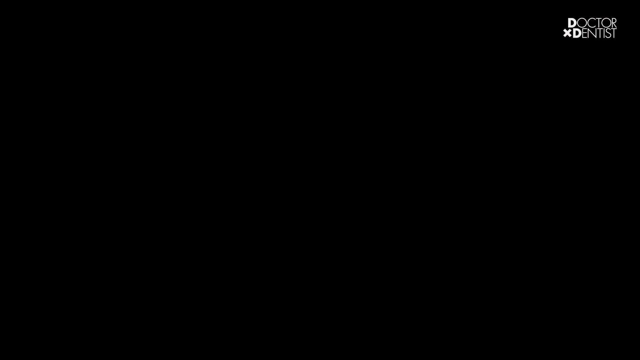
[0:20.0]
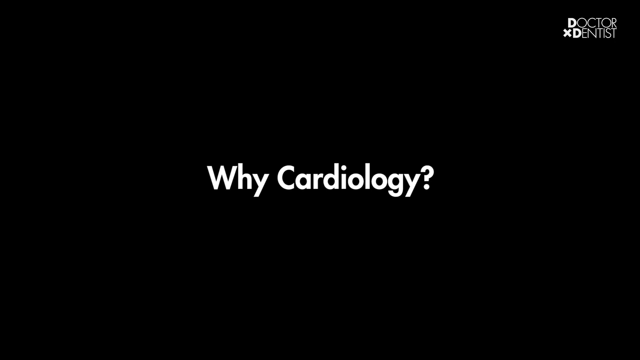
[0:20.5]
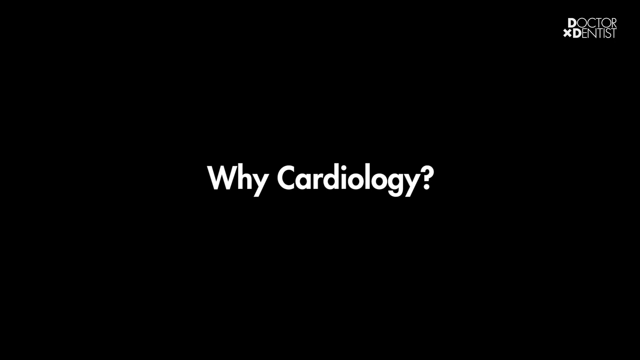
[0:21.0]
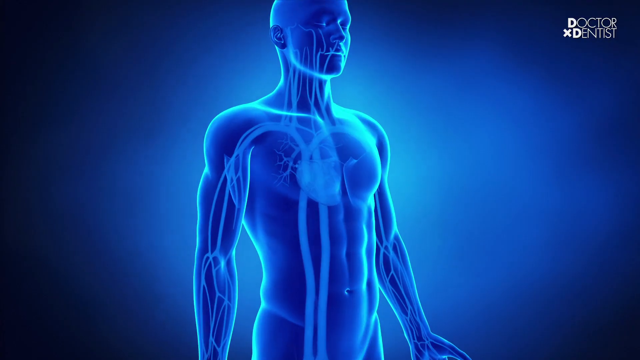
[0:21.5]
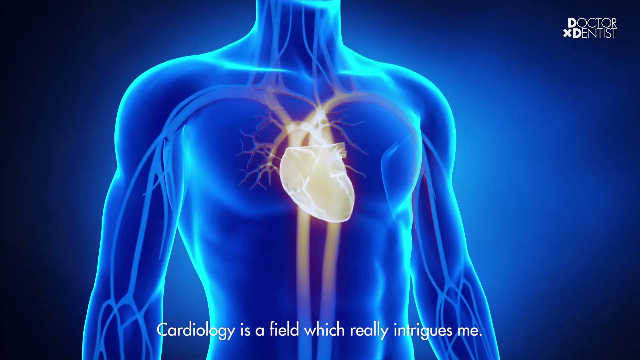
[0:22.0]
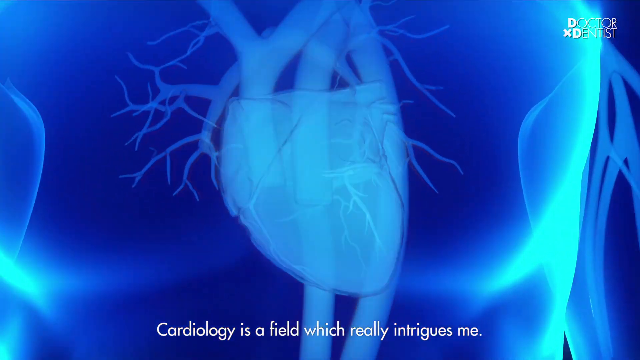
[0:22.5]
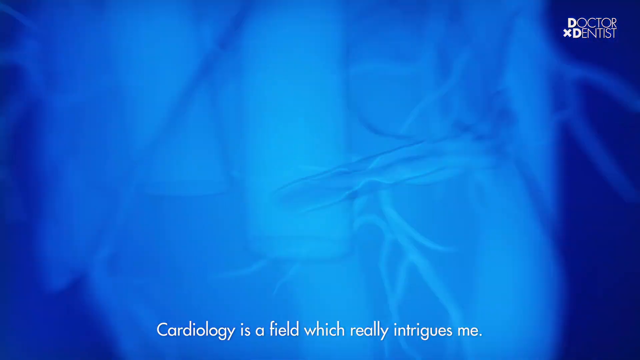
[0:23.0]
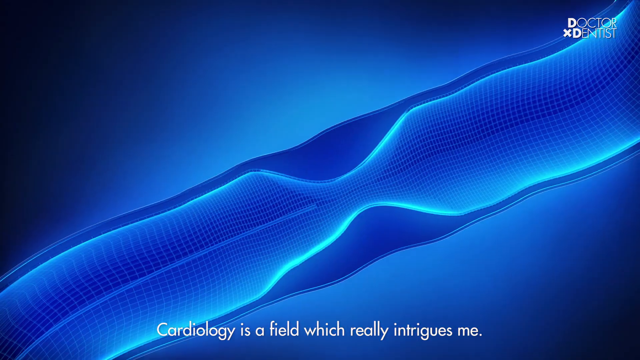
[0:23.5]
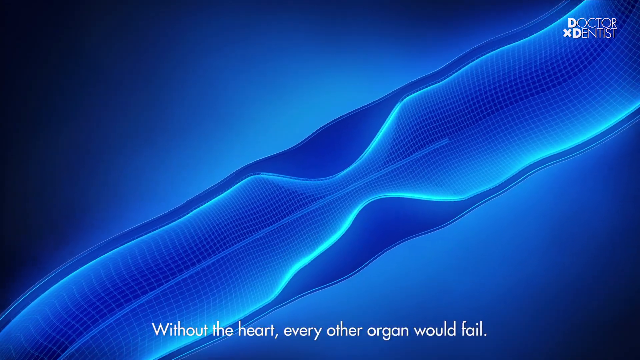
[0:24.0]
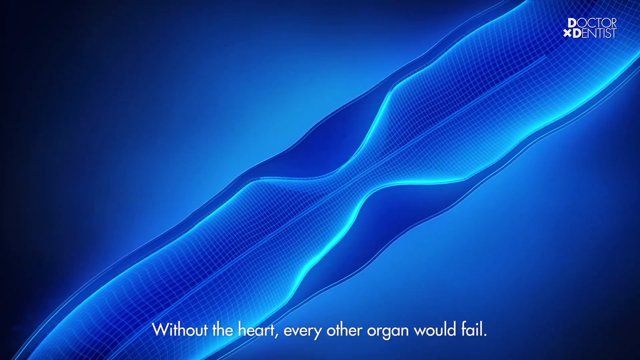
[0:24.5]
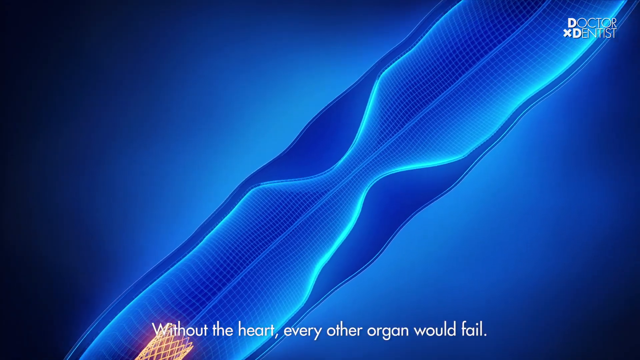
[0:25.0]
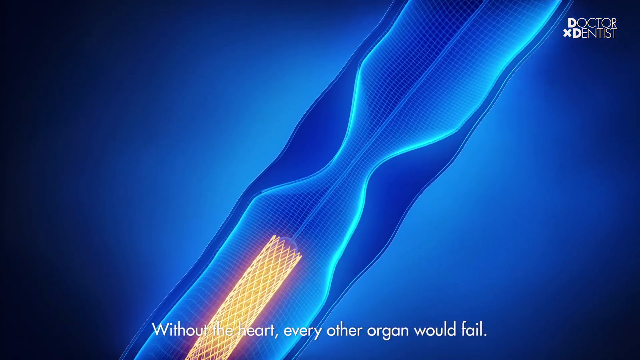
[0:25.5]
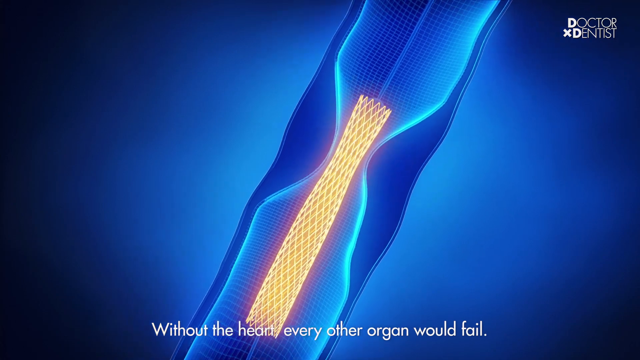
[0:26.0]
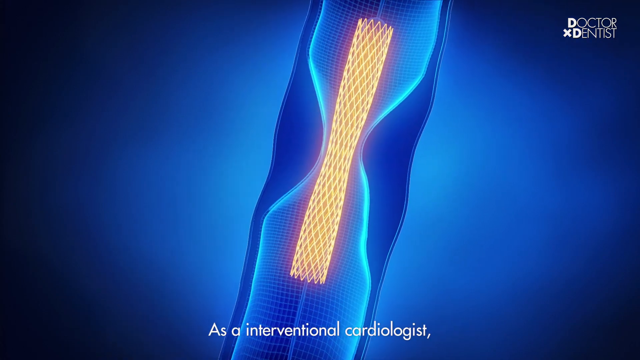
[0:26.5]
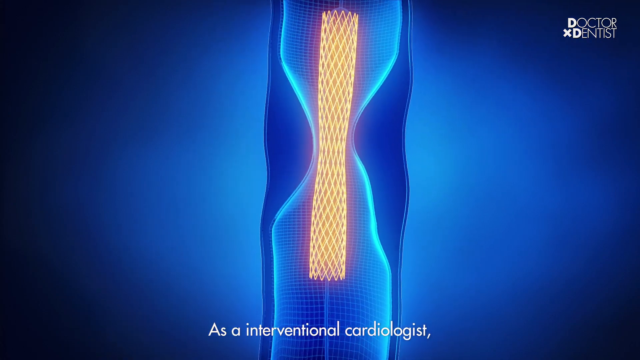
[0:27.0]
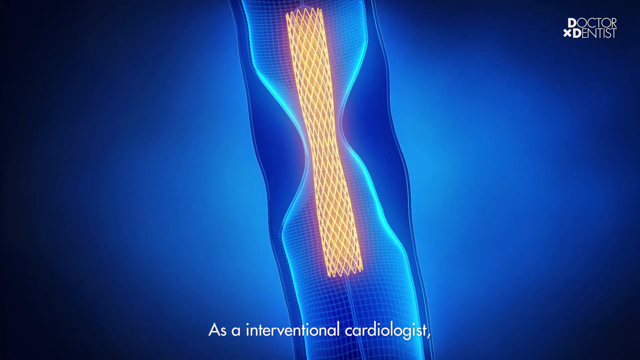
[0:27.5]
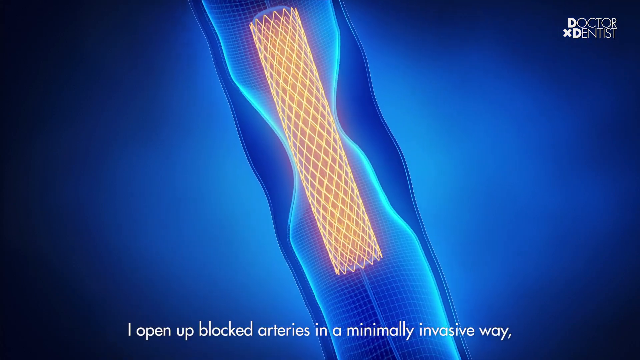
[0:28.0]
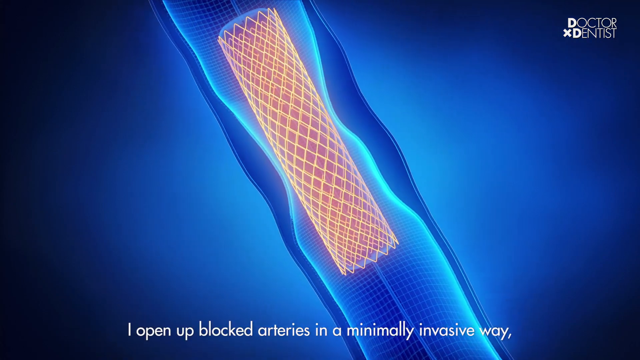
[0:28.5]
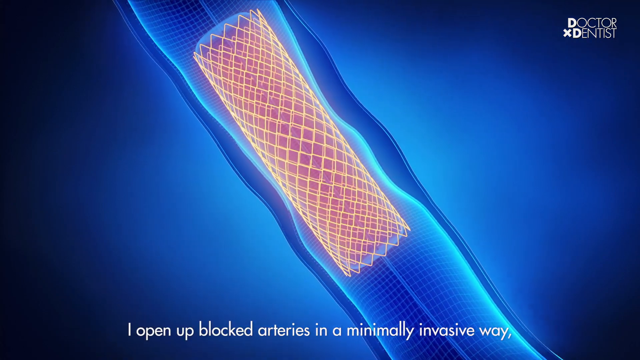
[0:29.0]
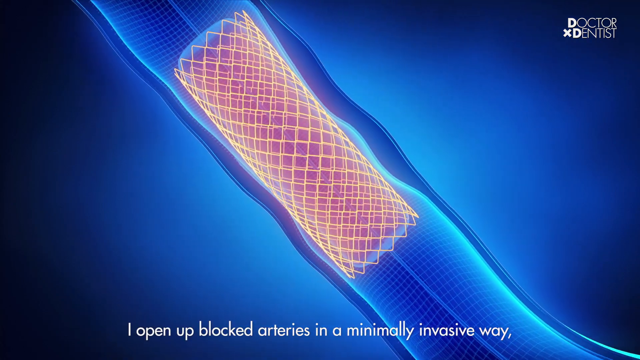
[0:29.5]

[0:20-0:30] A black screen reads "why cardiology." It immediately switches to a diagram of a person shown in blue, like an x-ray, so the heart is visible through the body, along with cords that could be all the cords connected to the heart running through the body. The video zooms in on the person's chest and toward the heart, which is highlighted in a gold-yellow-orange color against the blue of the person so it stands out clearly. Closer in, the inside of the heart is visible, showing what are presumably different ventricles. The view zooms into one of the cords, where an object lit up in orange moves through it and seems to expand through the cord. Then there is a short shot of the heart diagram the doctor was showing the woman.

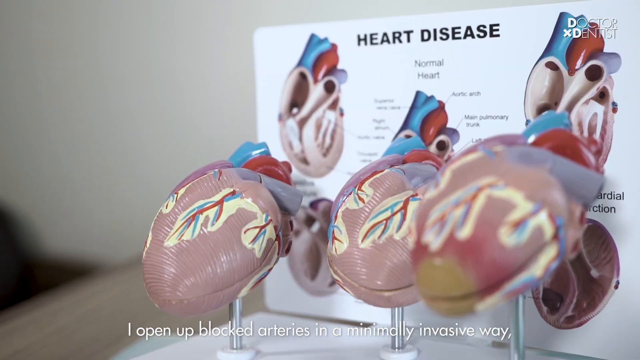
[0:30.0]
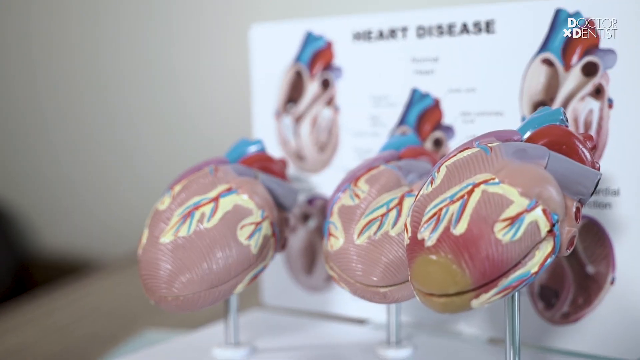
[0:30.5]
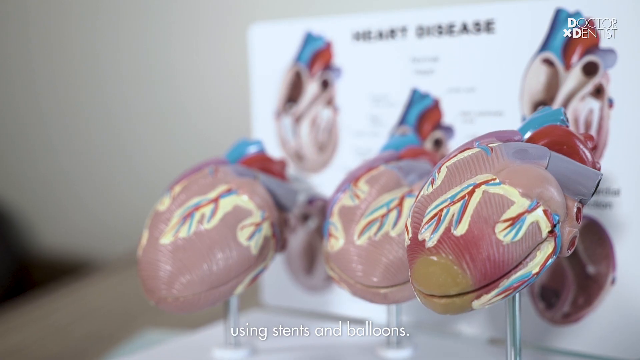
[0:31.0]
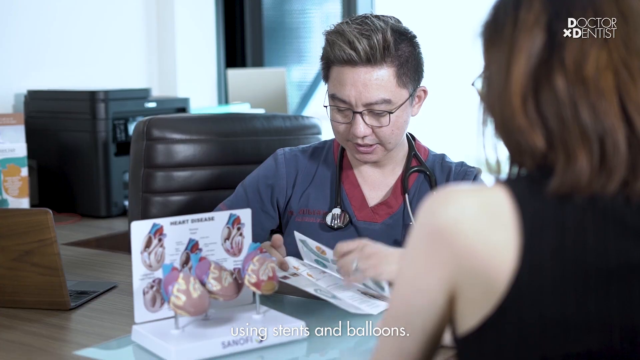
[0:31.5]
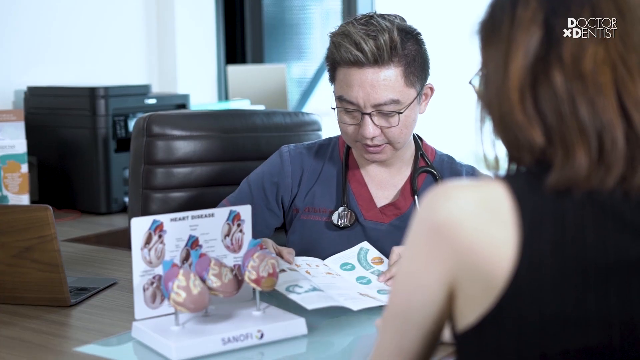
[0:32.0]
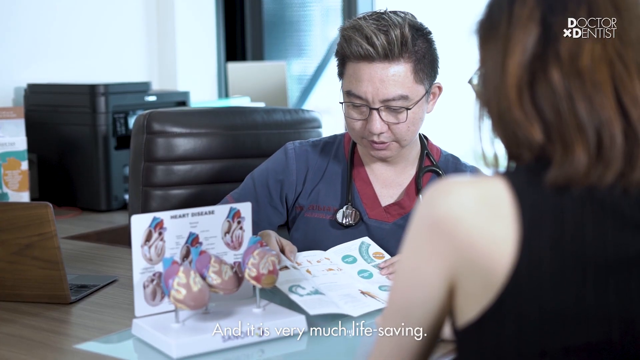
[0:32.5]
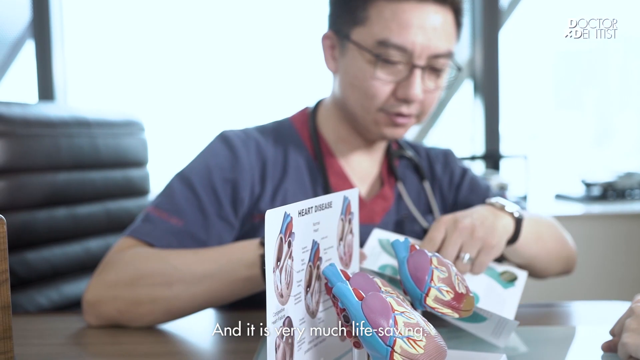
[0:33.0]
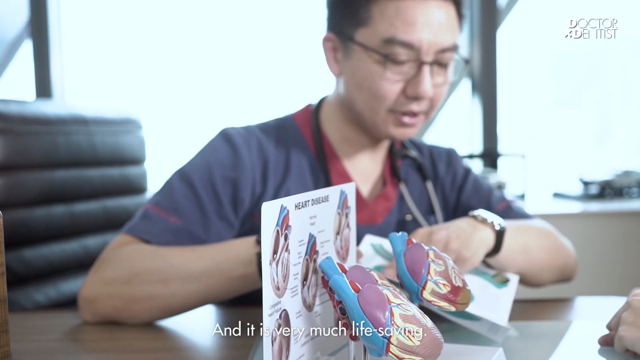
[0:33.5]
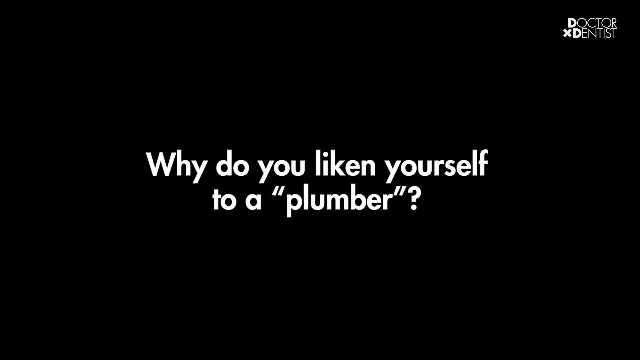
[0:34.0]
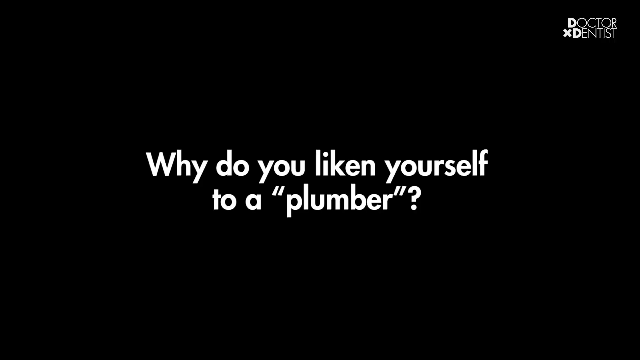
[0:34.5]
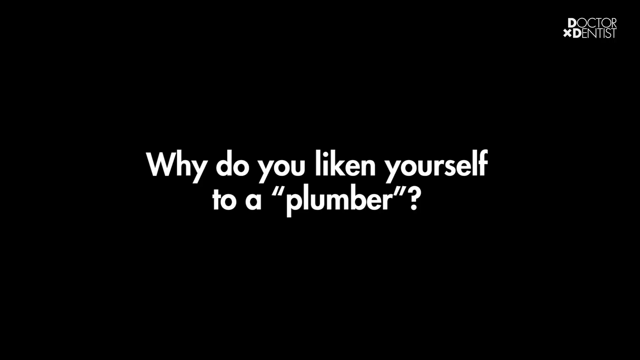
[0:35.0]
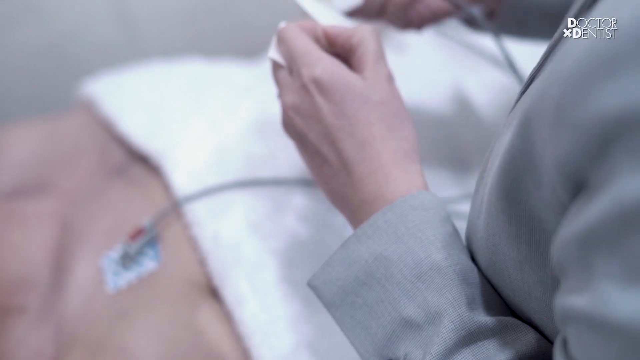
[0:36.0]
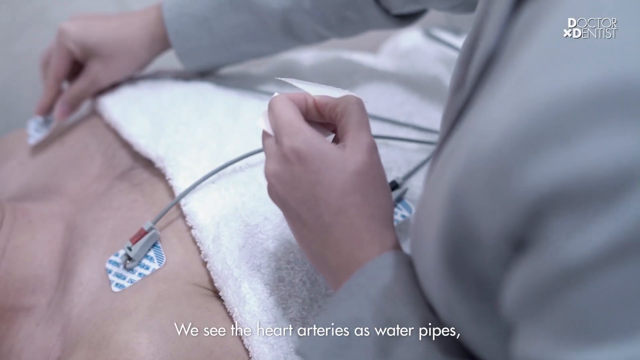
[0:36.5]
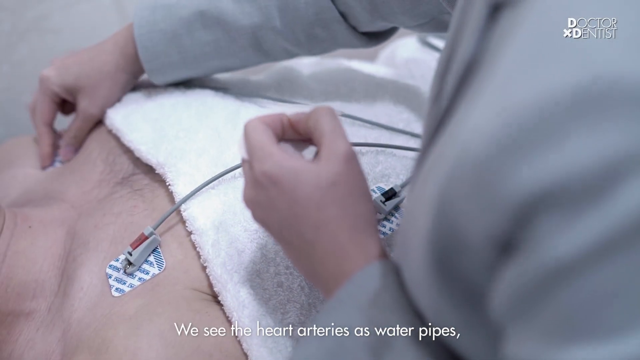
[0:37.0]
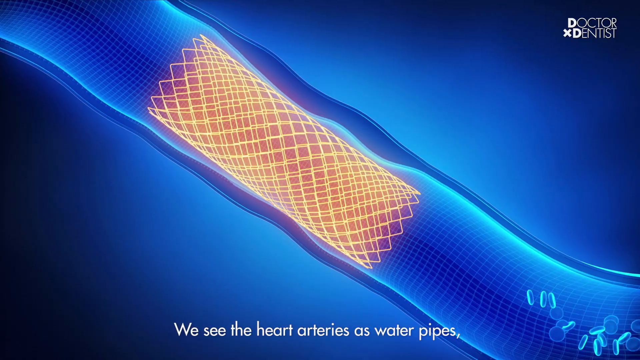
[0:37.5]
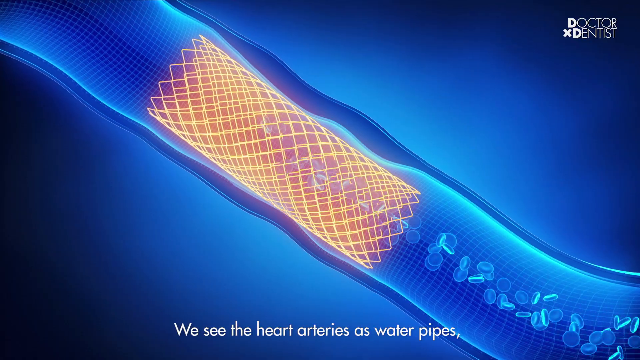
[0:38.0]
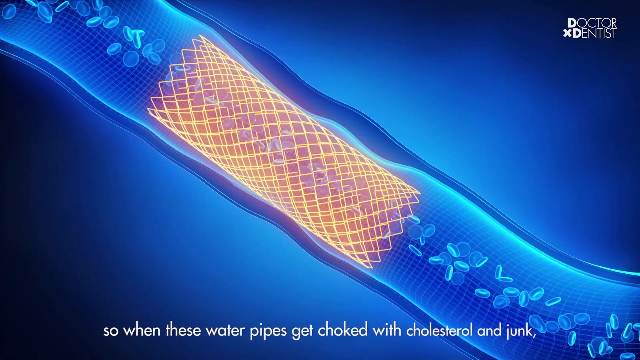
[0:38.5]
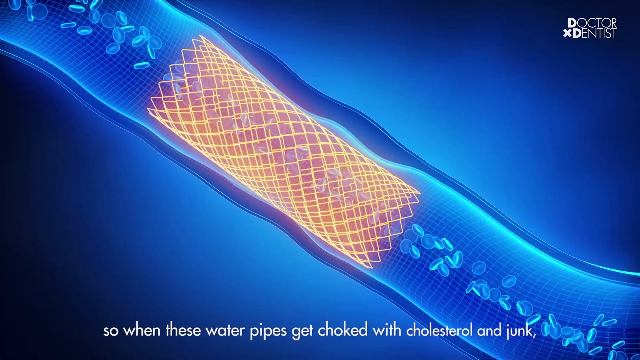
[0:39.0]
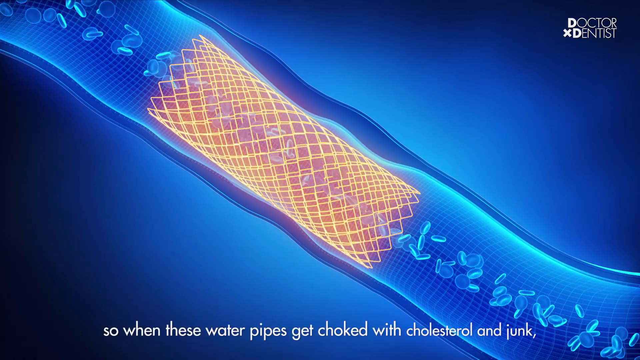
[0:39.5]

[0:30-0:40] Dr. Julian Tan again shows a woman the same heart diagram, which is labeled "heart disease," and there is also a physical model of the heart that looks exactly like the pictures in the diagram. A black screen with letters reads "why do you liken yourself to a plumber?" A doctor puts patches connected to wires on a patient's chest. The blue x-ray view of a person's heart returns, and in one of the heart ventricles, where the lit-up object was, little circular objects, maybe cells, move pretty fast through the cord and throughout the heart.